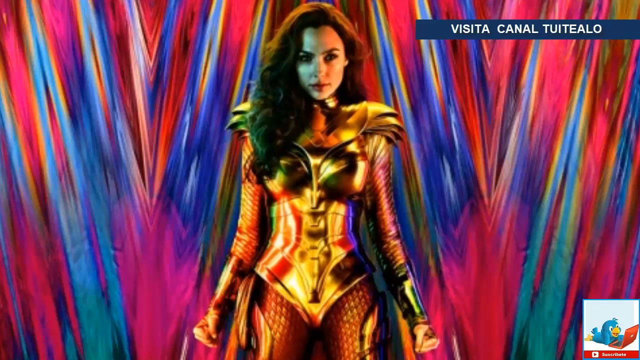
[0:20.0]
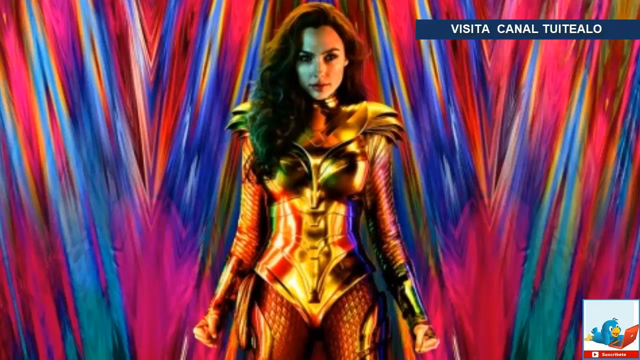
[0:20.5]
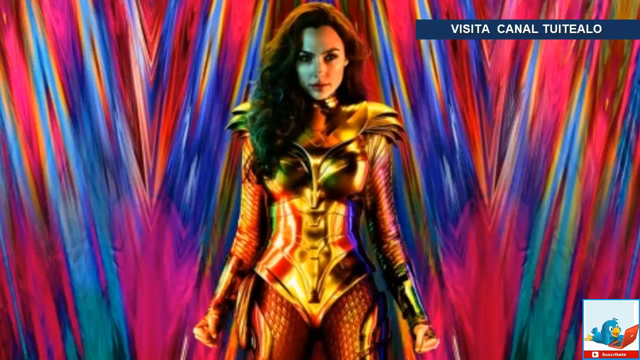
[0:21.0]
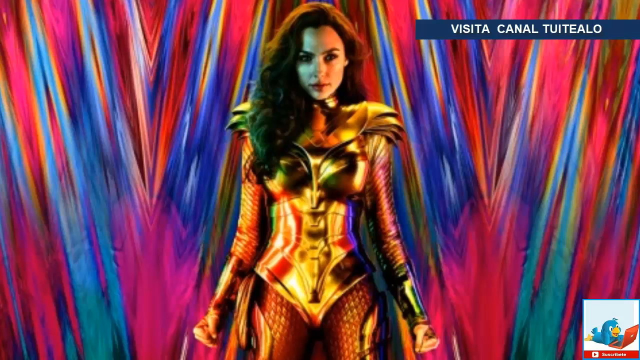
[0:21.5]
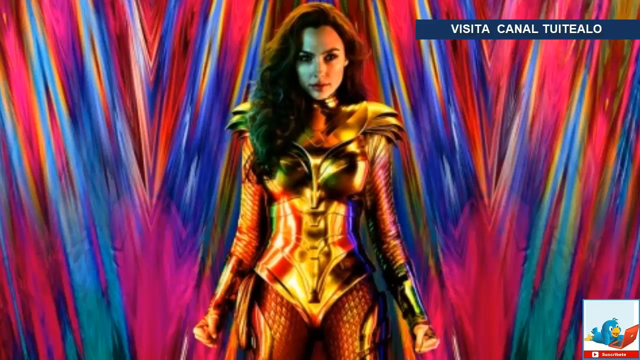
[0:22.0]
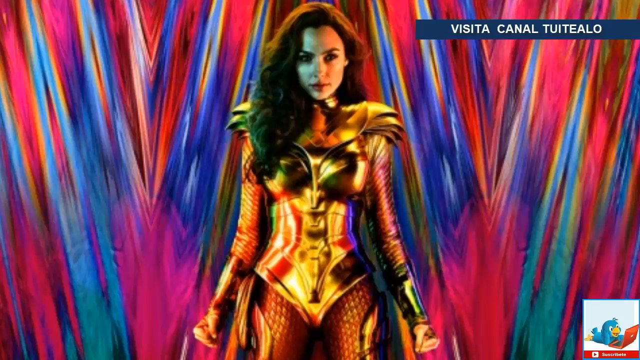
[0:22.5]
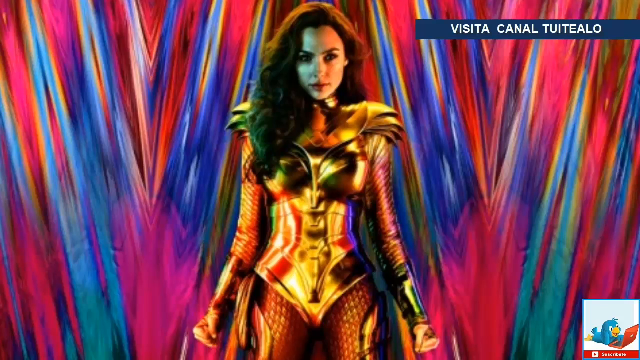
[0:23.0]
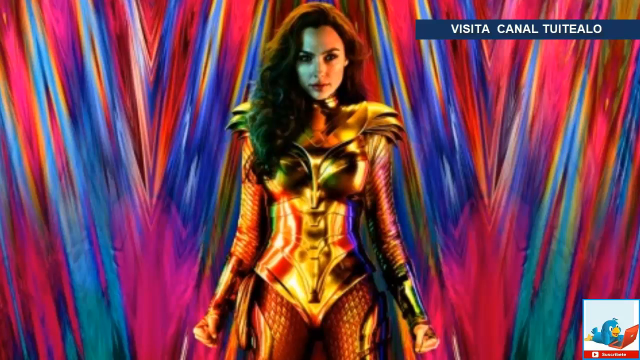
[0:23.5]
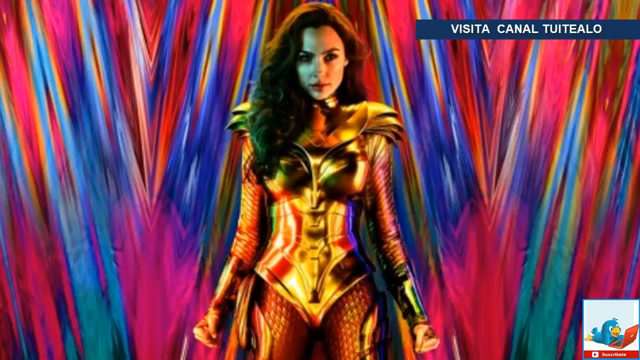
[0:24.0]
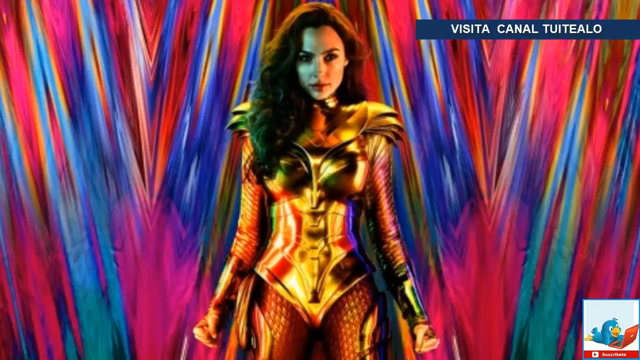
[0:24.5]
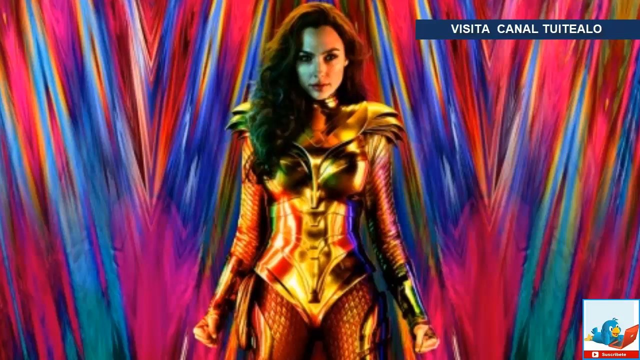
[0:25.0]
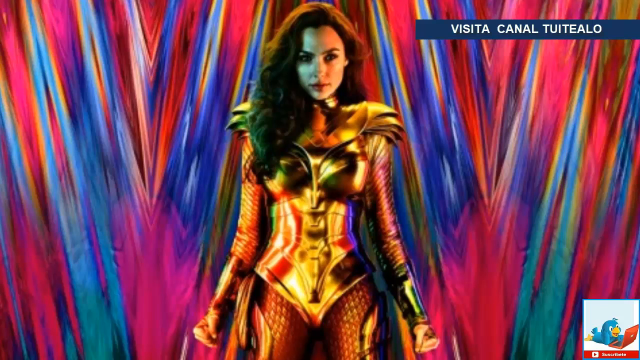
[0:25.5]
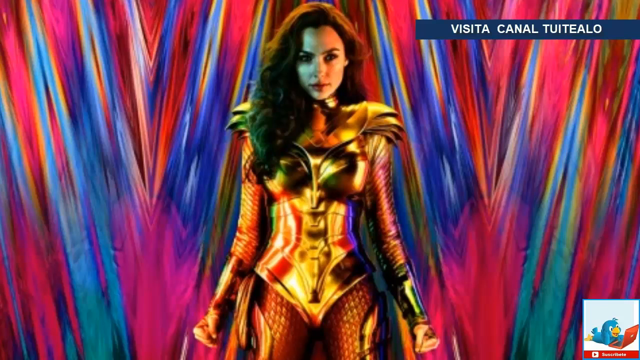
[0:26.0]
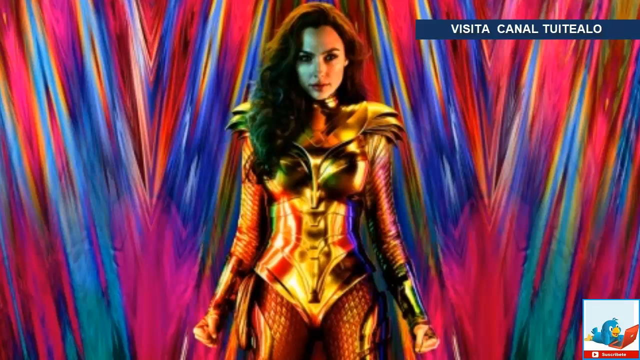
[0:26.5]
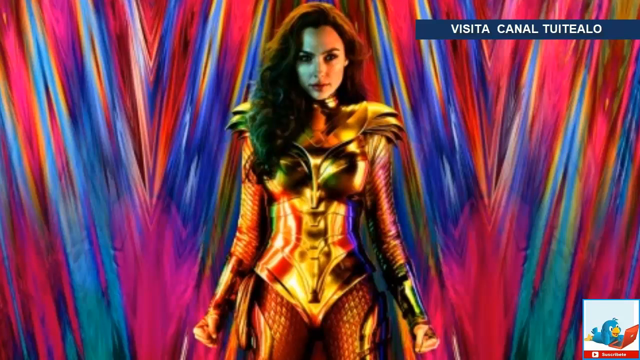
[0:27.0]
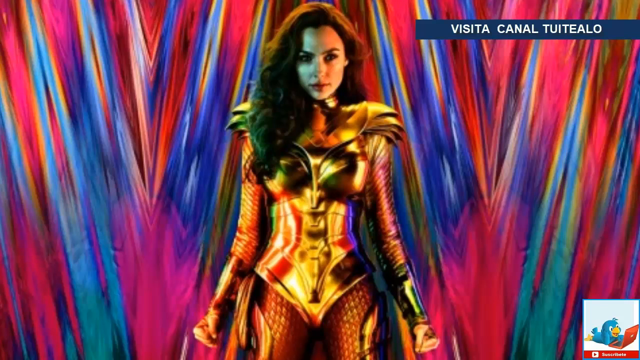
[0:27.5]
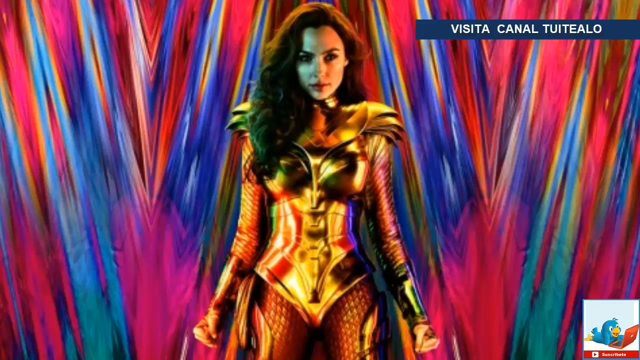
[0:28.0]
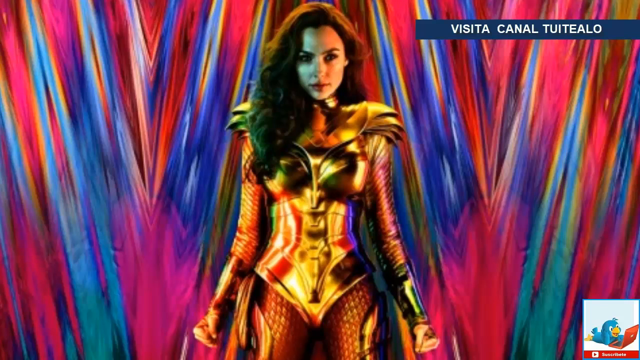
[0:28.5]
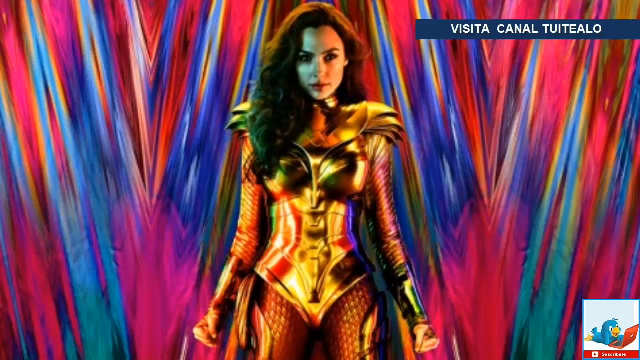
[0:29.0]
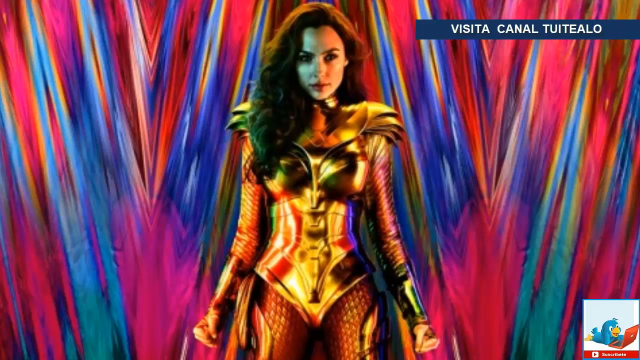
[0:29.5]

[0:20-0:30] A woman with dark brown hair, dark eyebrows, dark eyes and red painted lips is wearing what looks to be a golden armor costume. Behind her is a mix of red and blue stripes that seemingly blend together to create pink at some points. The screen is still, just showing the woman. In the top right corner there is a blue text box with white text that appears to be in a Latin language.